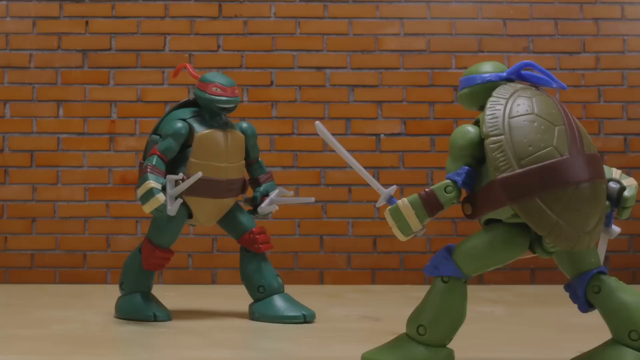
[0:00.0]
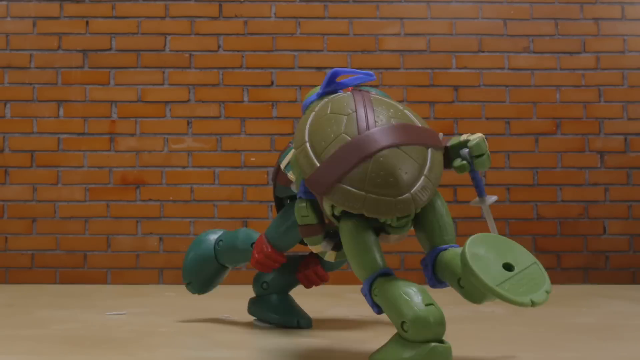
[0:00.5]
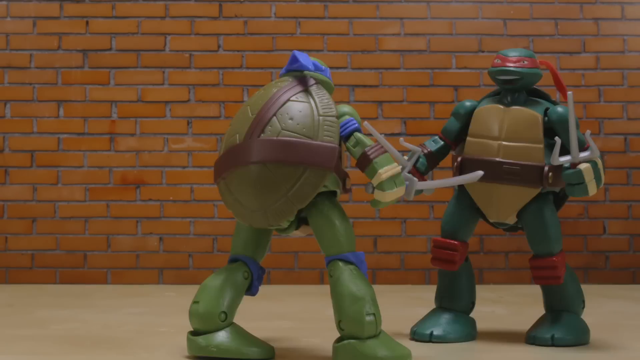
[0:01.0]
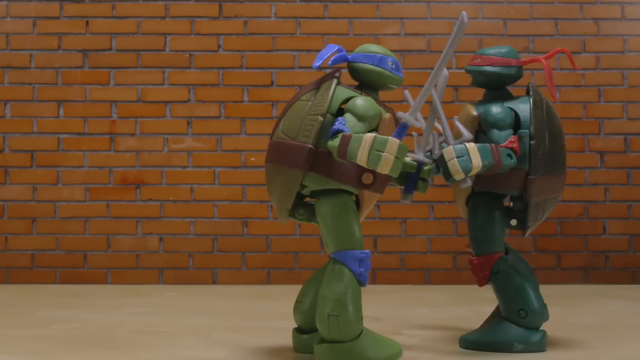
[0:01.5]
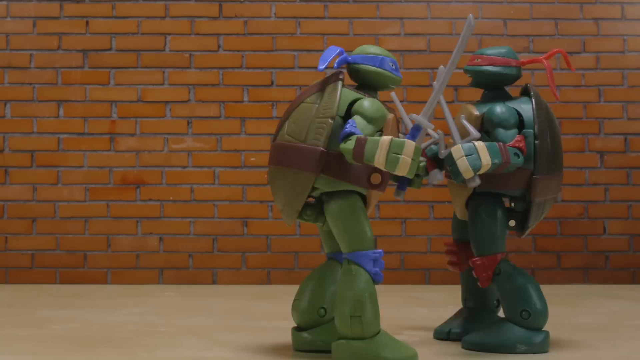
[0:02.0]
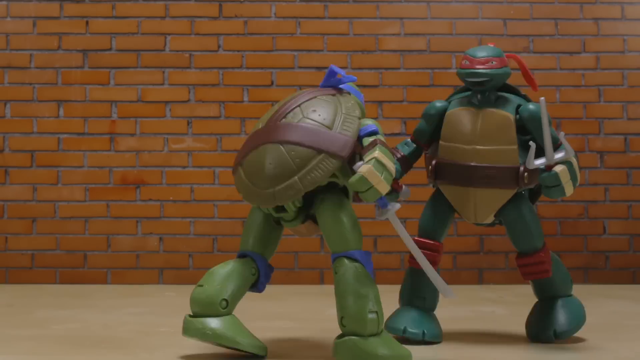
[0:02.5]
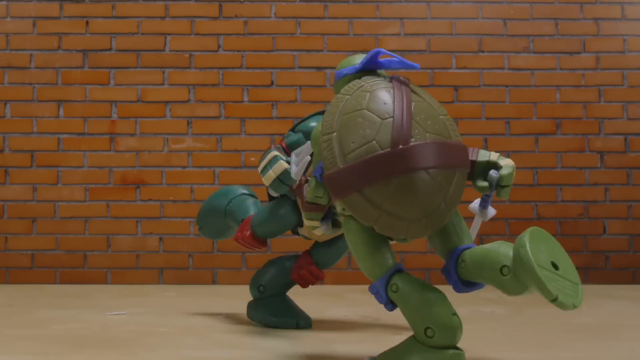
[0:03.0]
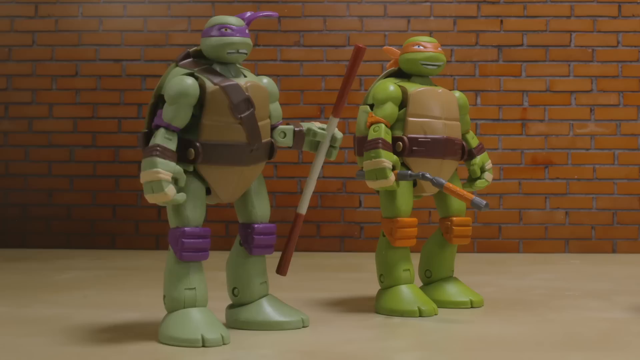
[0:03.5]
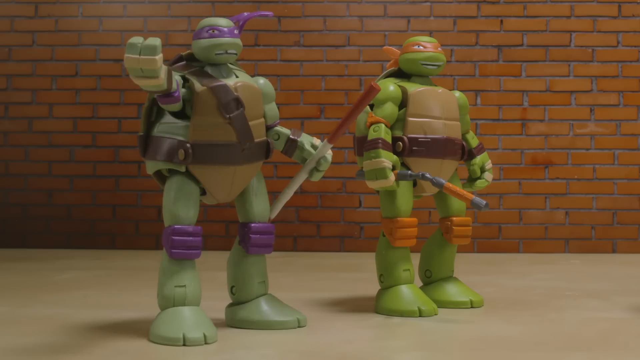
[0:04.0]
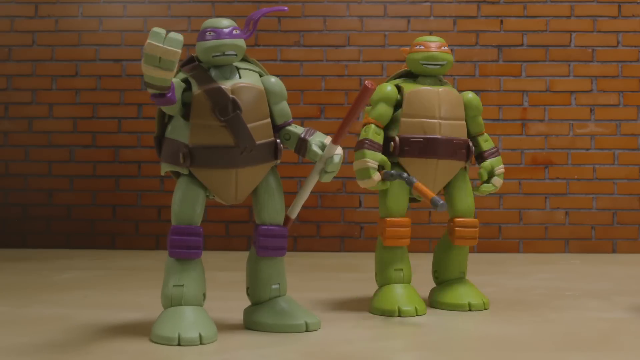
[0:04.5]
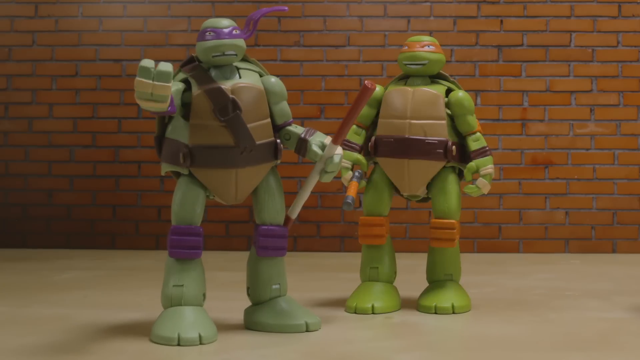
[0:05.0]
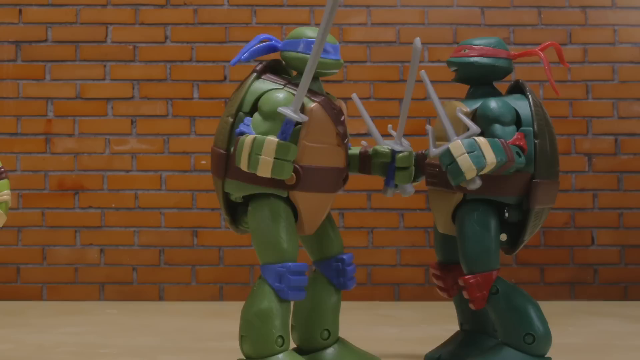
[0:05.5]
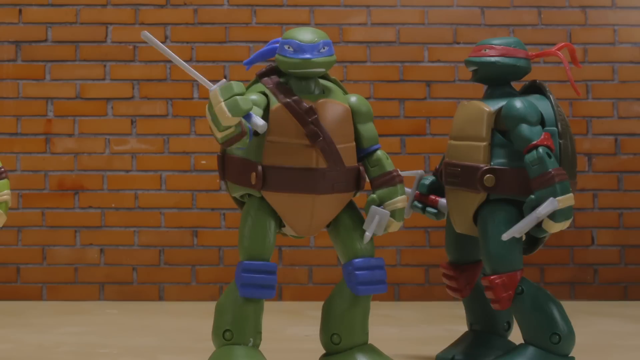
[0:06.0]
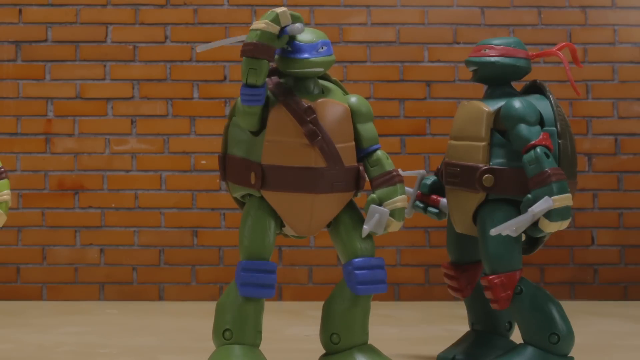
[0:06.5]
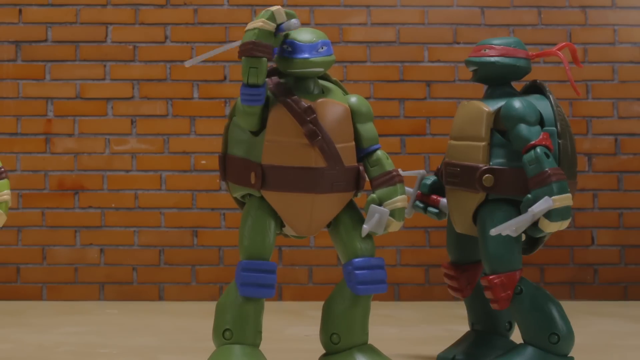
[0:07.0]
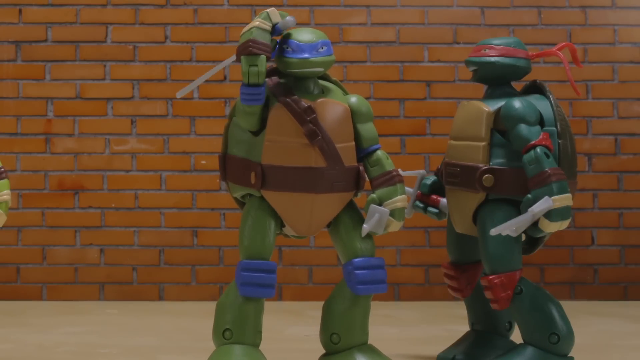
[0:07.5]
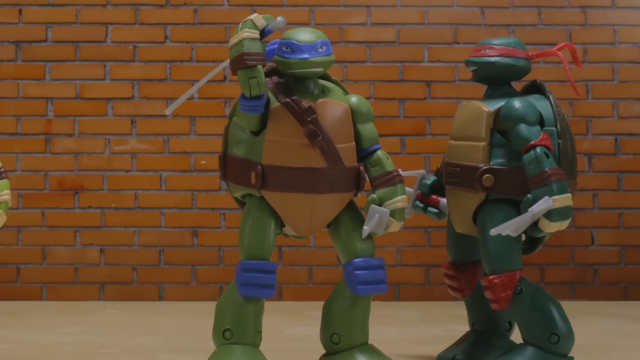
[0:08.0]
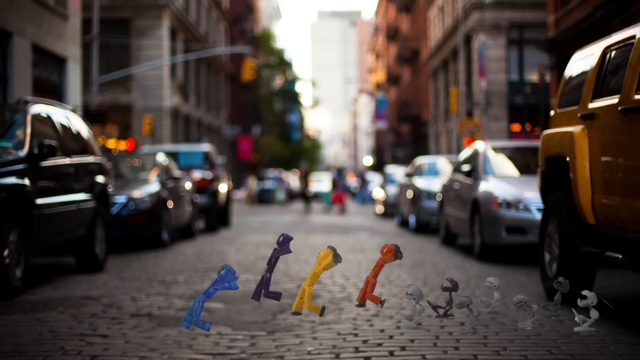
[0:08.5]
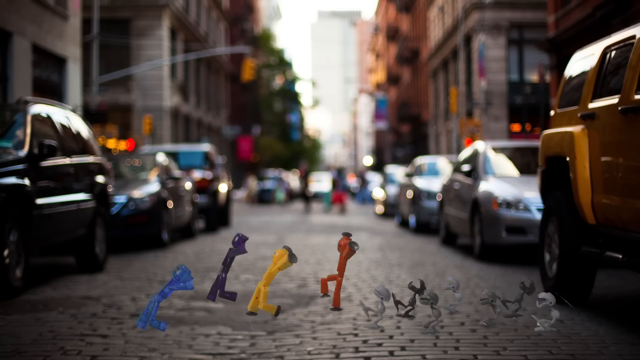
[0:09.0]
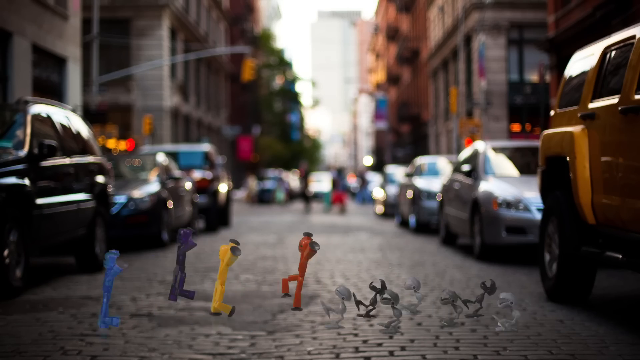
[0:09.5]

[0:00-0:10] Two Ninja Turtles figures are fighting in front of a back wall that looks almost like Robot Chicken style. The back wall is brick all the way down to about two inches from the ground, below which the white ground is visible. On the left is Raphael, a dark green turtle with a white chest plate and red around his head, elbows and knees, holding sai in his hands; he faces to the right and slightly forward. On the right is Leonardo, with blue around his knees, head and elbows, holding swords; he faces inward toward Raphael, so the back of his head is visible. Raphael moves to the right as Leonardo goes left, and they kind of bang into each other, hitting swords. Donatello then appears on the left, facing the camera and holding his staff with his left arm out toward the camera, and to his right is Michelangelo, in orange, holding nunchucks; Donatello is in purple. Leonardo stops fighting Raphael and scratches his head, looking at the camera, while Raphael stares at him. The video then cuts to some little creatures, really small like ants, running across a busy street.